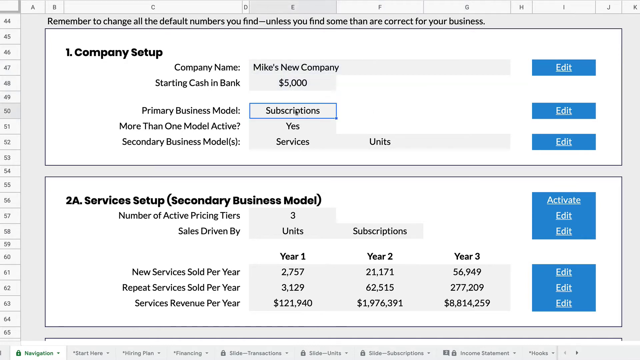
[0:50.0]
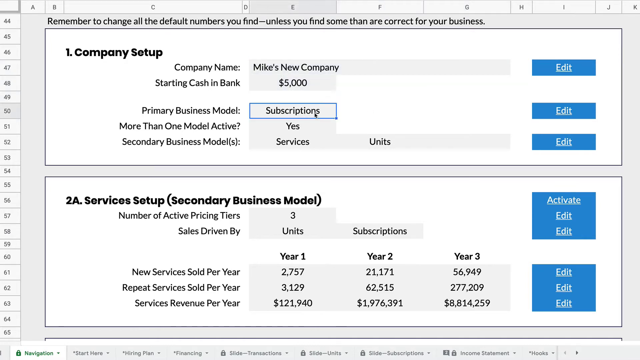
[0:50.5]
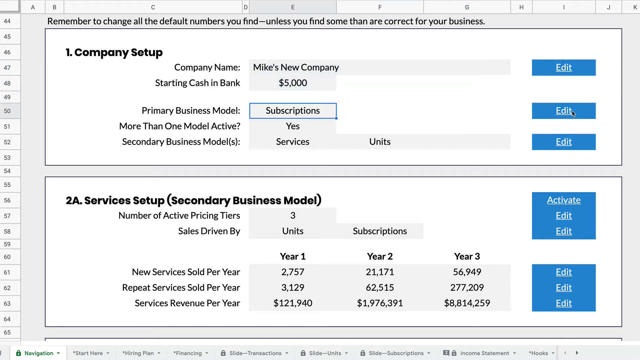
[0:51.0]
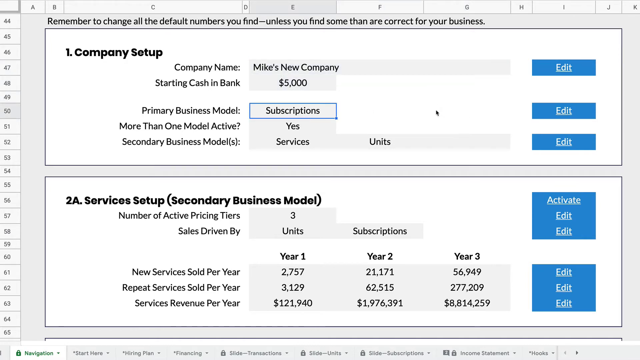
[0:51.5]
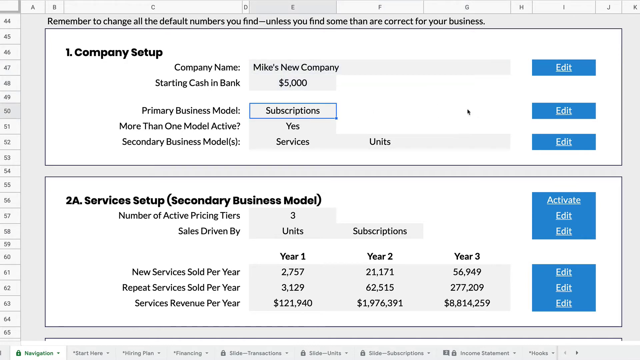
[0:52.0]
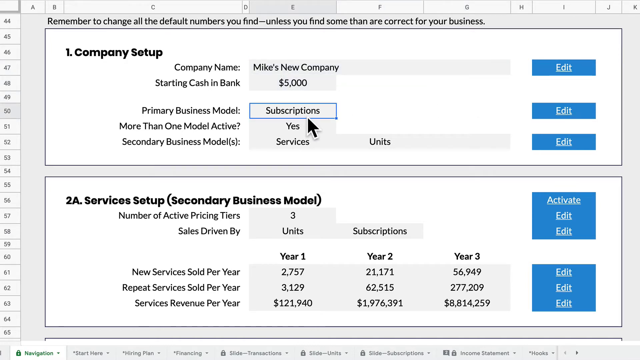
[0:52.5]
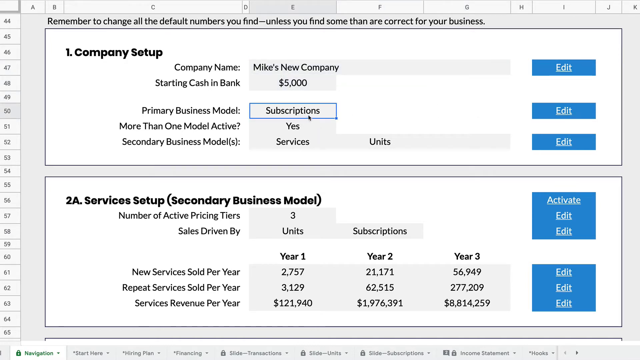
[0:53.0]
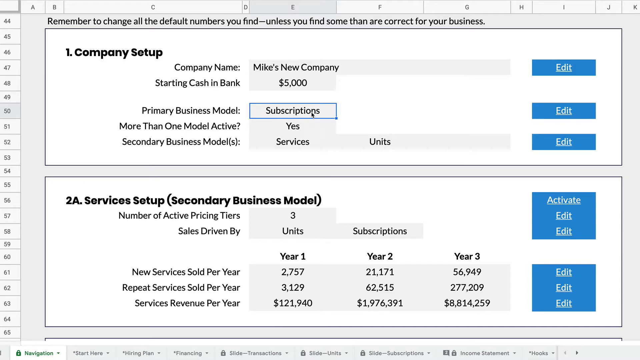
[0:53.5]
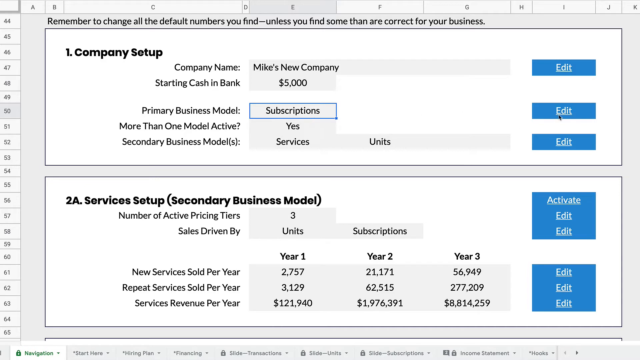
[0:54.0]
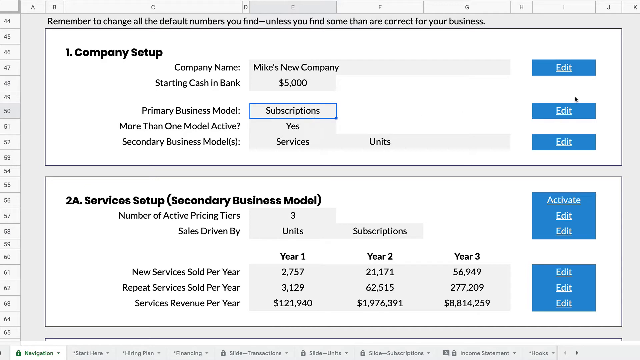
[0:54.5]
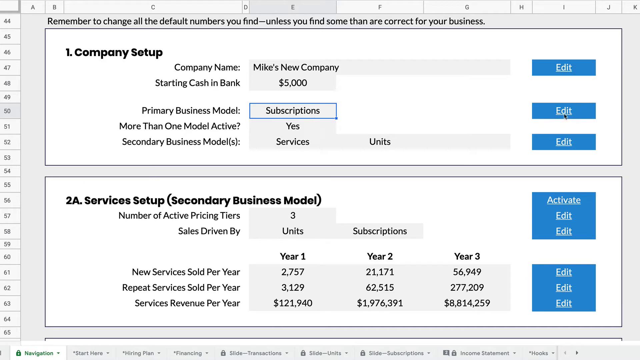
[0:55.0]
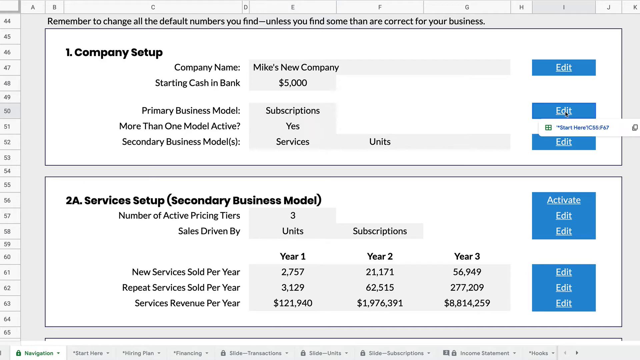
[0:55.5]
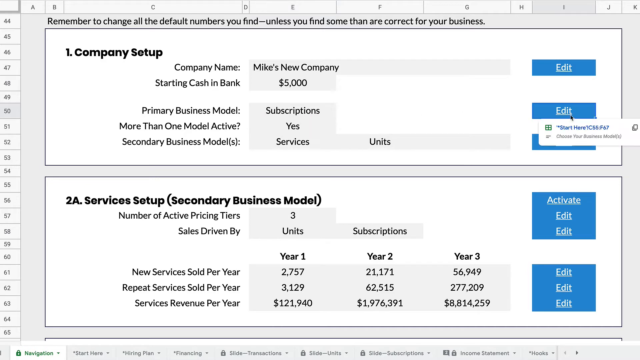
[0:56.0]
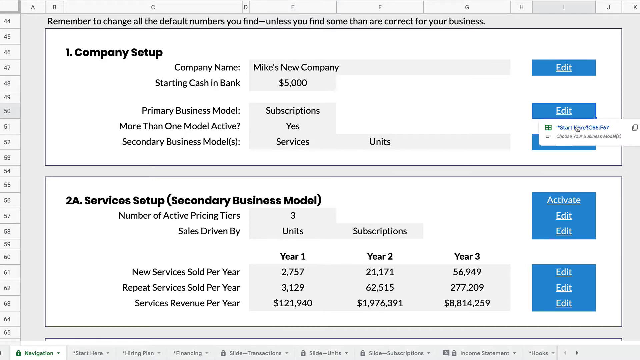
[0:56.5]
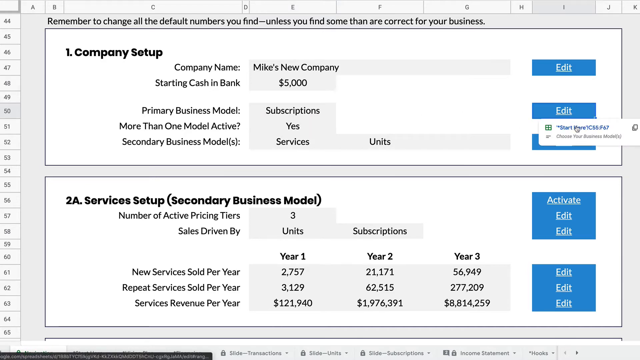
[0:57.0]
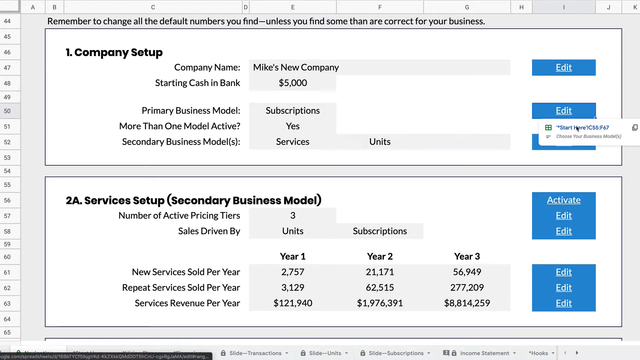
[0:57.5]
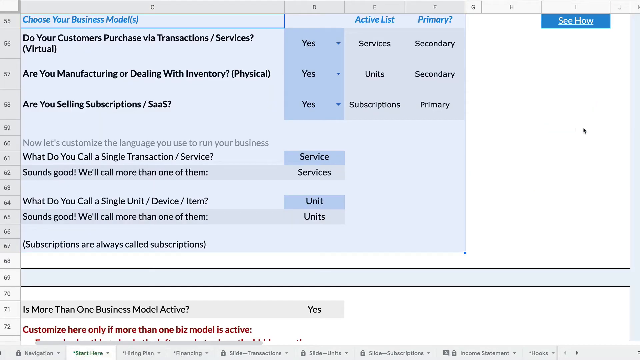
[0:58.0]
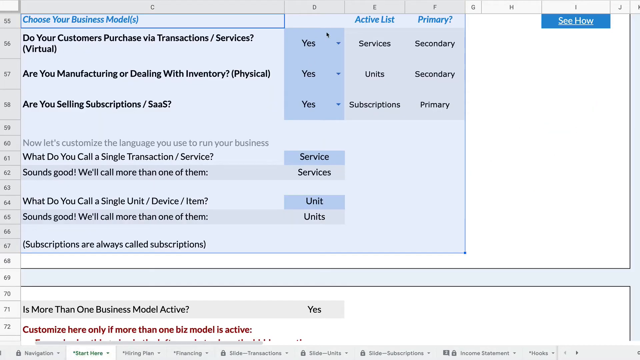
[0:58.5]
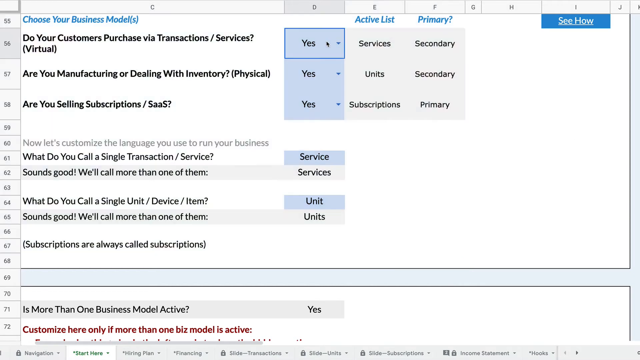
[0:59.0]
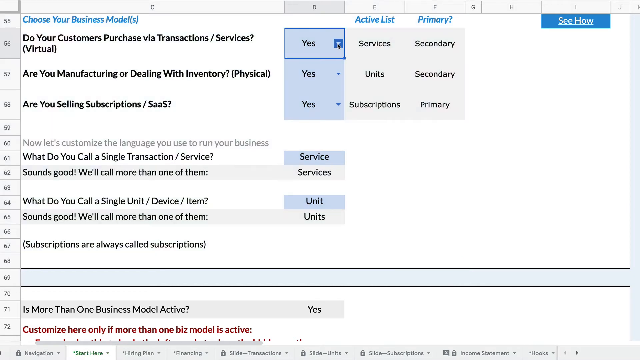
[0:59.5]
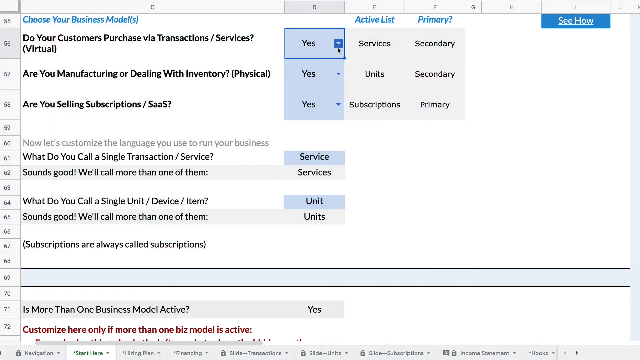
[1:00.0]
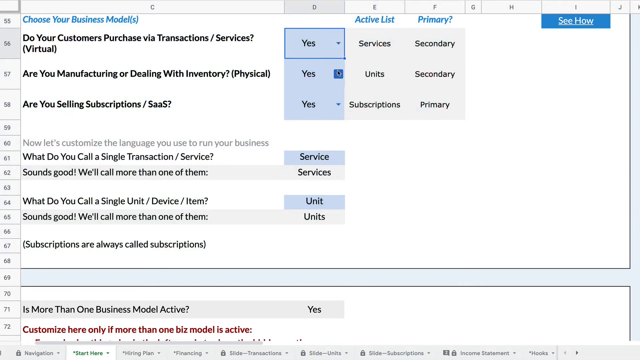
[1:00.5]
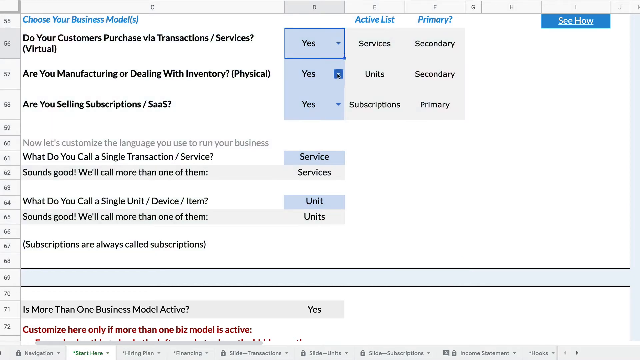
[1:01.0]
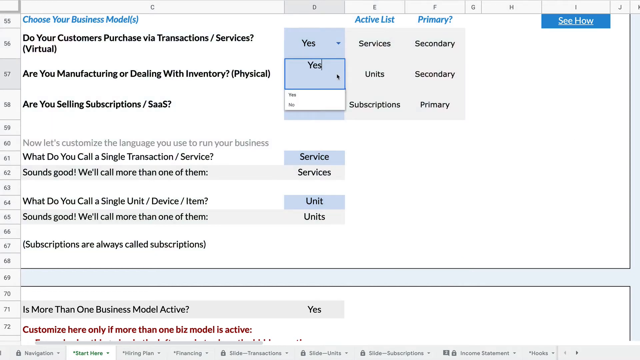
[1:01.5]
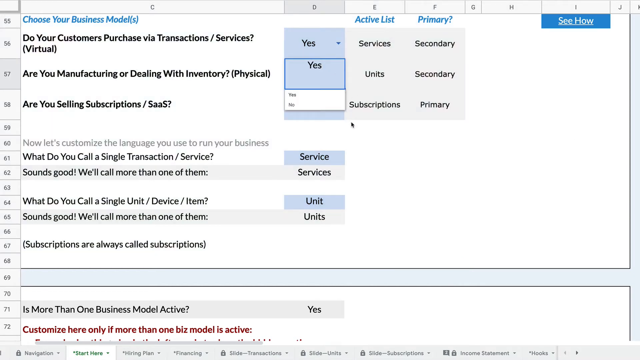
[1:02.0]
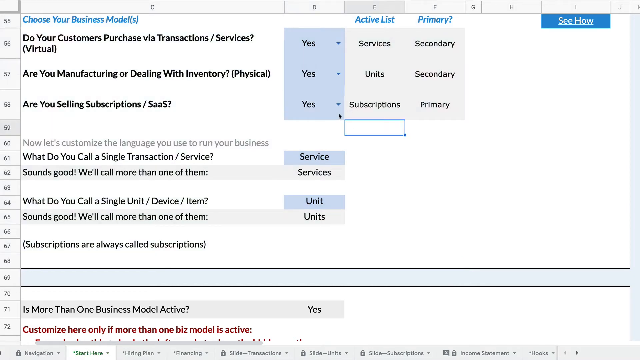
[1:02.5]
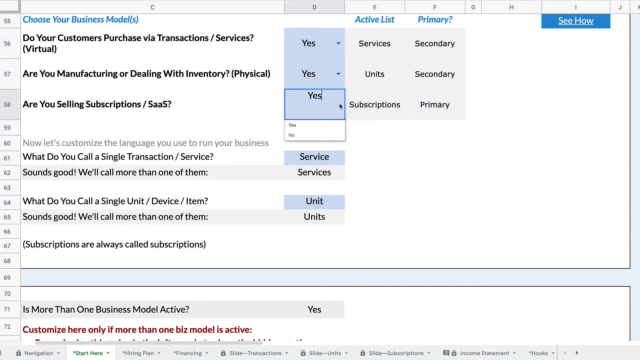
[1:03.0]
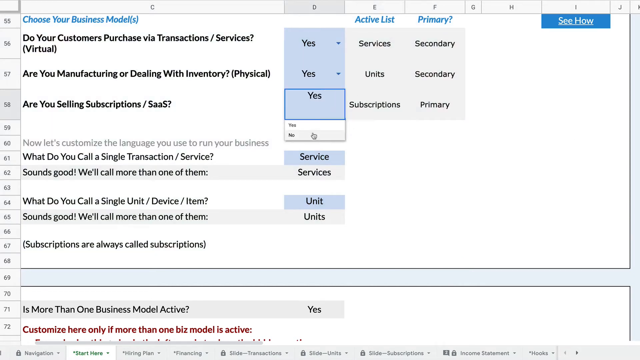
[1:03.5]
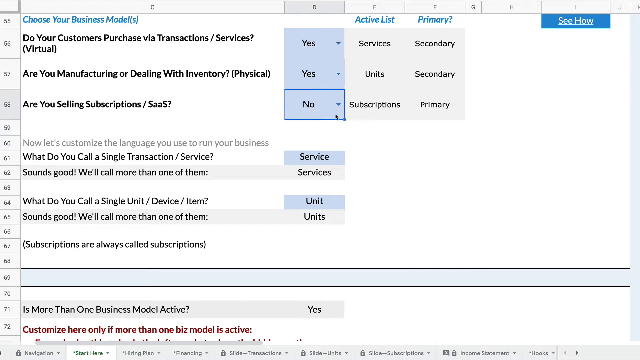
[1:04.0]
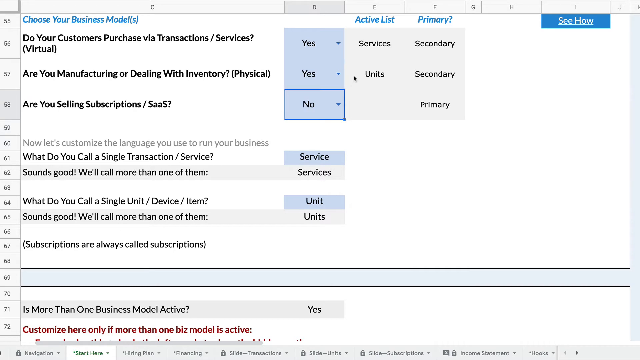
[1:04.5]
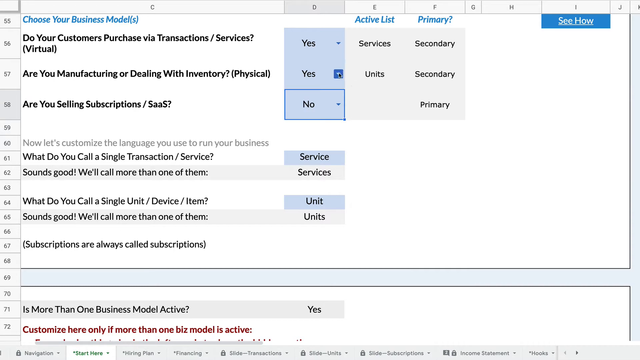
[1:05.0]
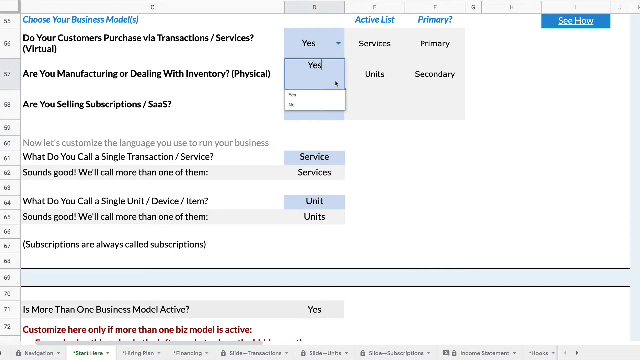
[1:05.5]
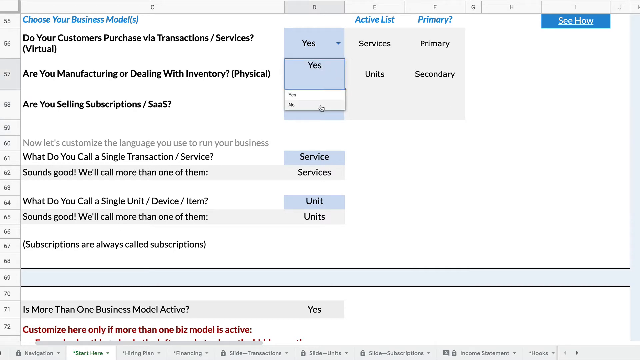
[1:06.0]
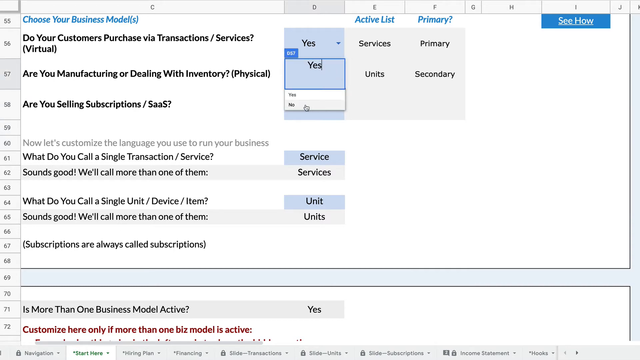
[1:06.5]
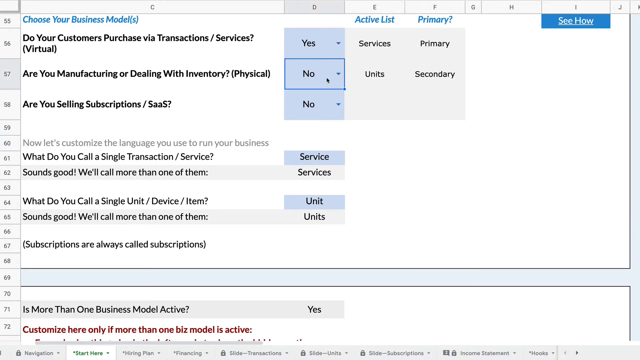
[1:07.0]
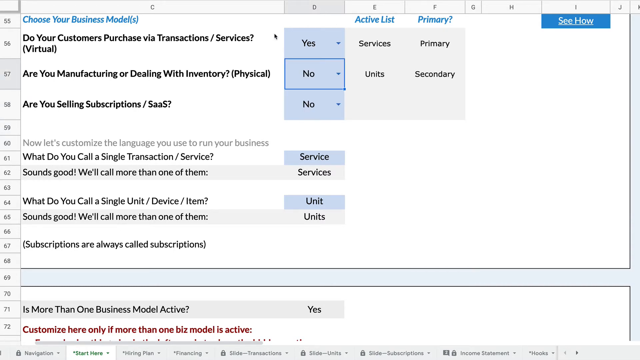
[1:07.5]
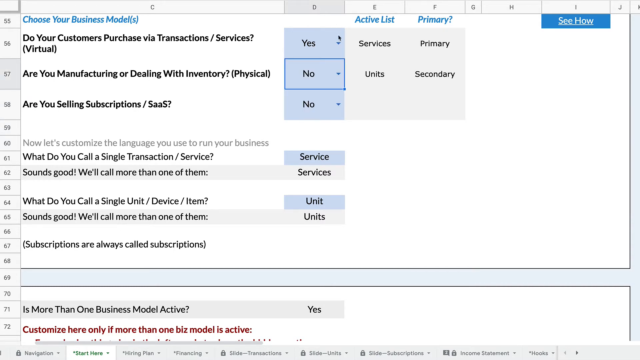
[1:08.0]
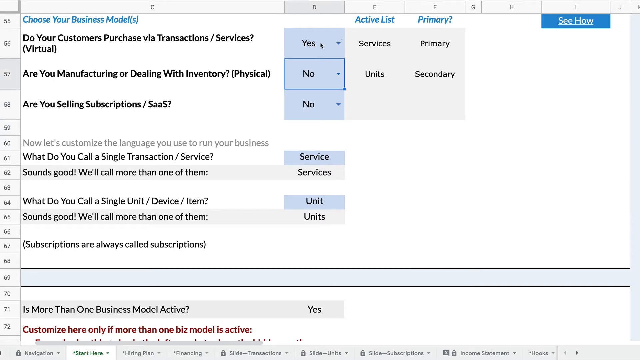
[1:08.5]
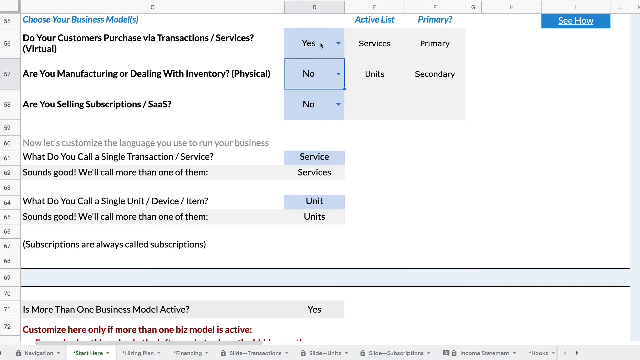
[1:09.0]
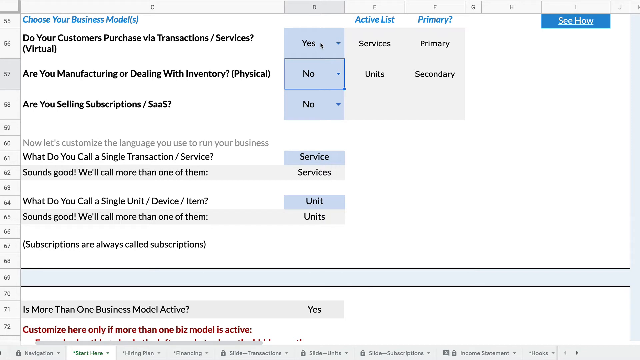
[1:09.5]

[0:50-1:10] Still on the same page, on subscriptions, the man hits the edit button labeled "start here," and a different page opens: "Choose your business model." For "Are you manufacturing or dealing with inventory or physical?" he clicks a dropdown set to yes. For "are you selling subscriptions?" the option is changed from yes to no. He changes the manufacturing or inventory question to no and keeps the last option the same. The page lists an active list with primary and secondary for each option: services, units, and subscriptions. More options appear to the side, including "let's customize the language you use to run your business," with fields such as "What do you call a single transaction service?" and "Sounds good, we'll call more than one of them," and "What do you call a single unit / device / item?" with options to enter singular and plural words such as services and units.